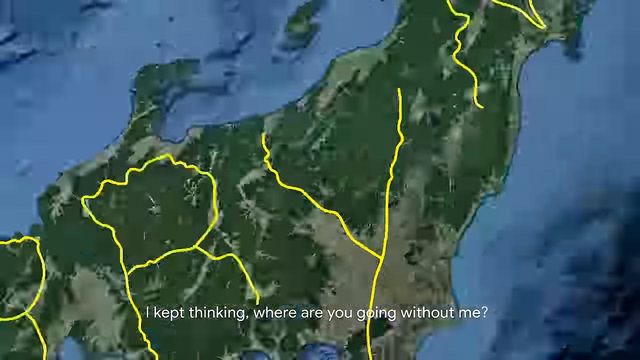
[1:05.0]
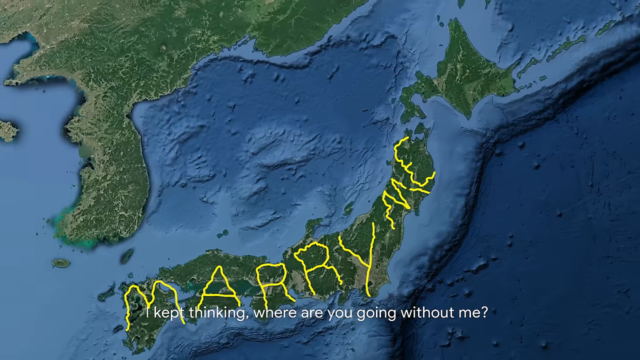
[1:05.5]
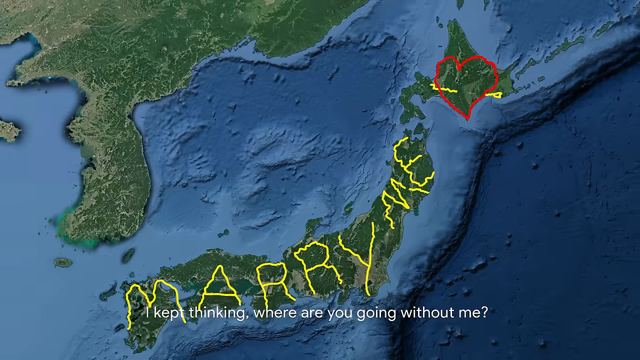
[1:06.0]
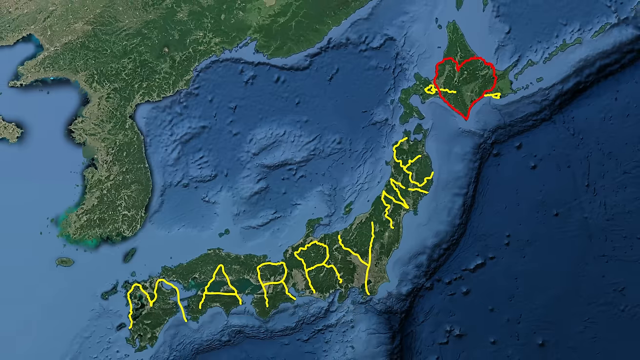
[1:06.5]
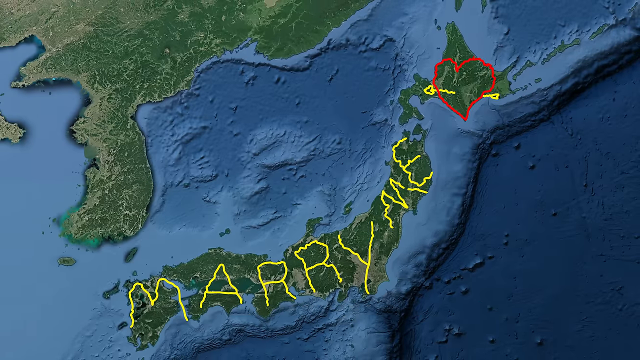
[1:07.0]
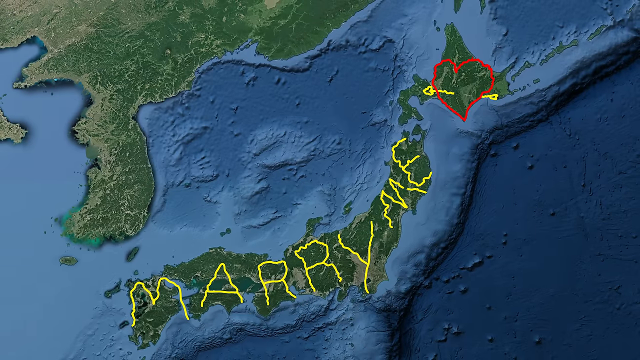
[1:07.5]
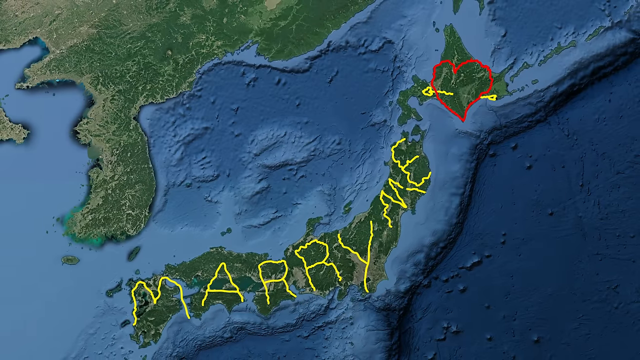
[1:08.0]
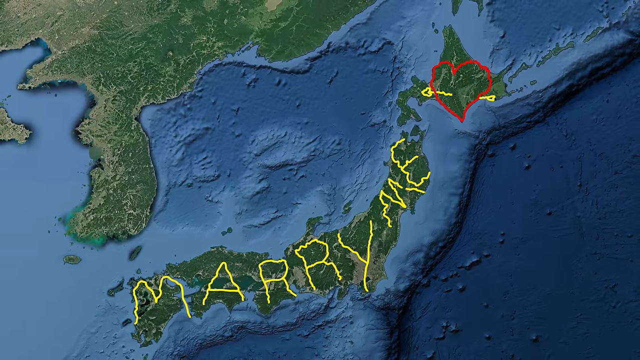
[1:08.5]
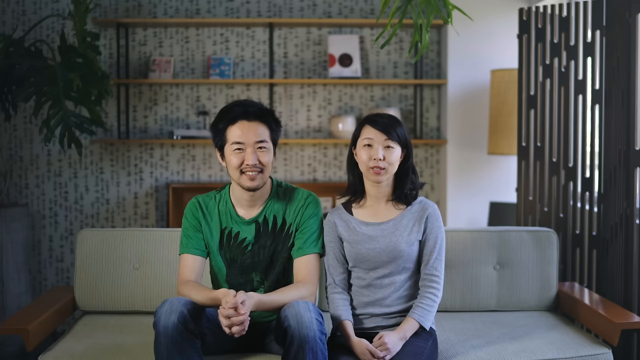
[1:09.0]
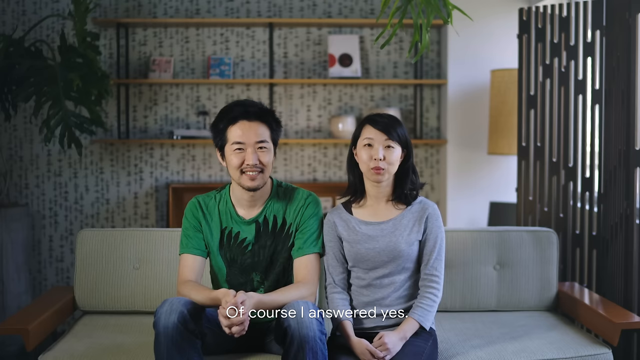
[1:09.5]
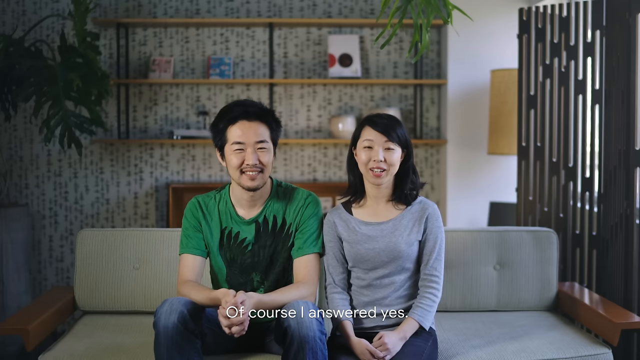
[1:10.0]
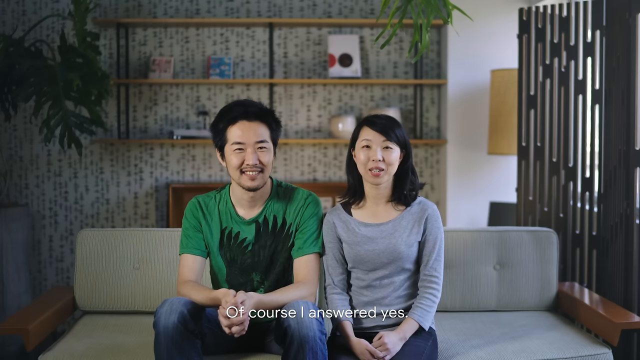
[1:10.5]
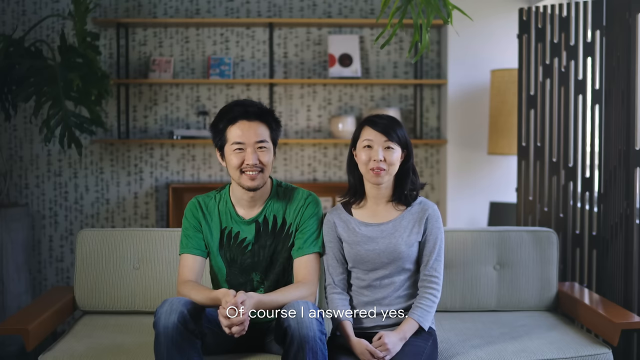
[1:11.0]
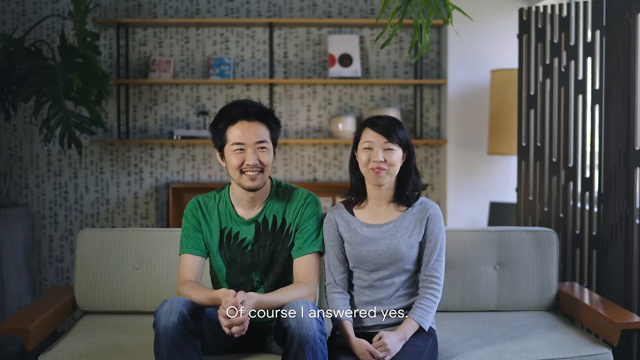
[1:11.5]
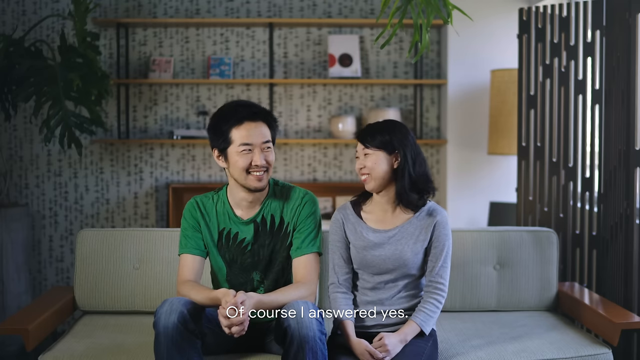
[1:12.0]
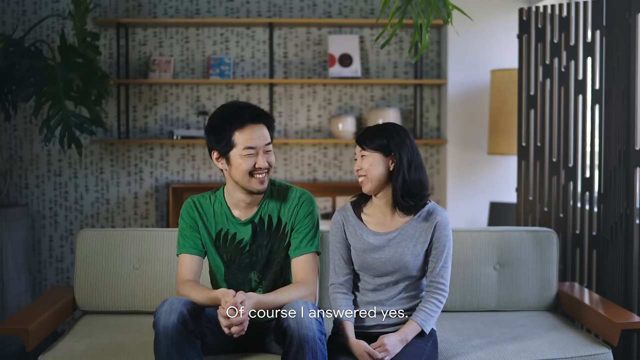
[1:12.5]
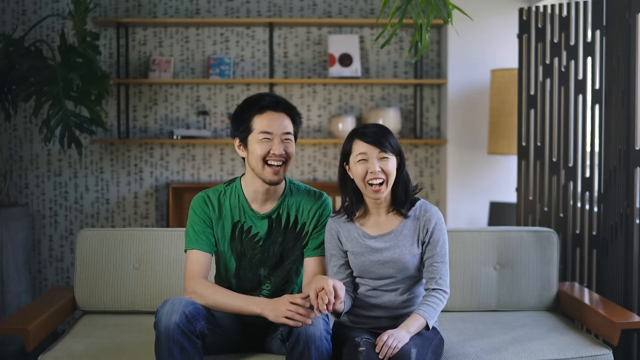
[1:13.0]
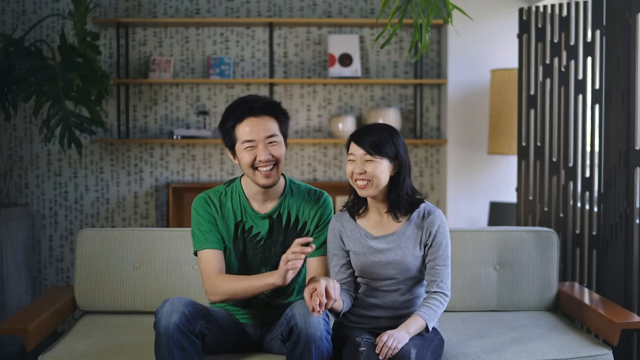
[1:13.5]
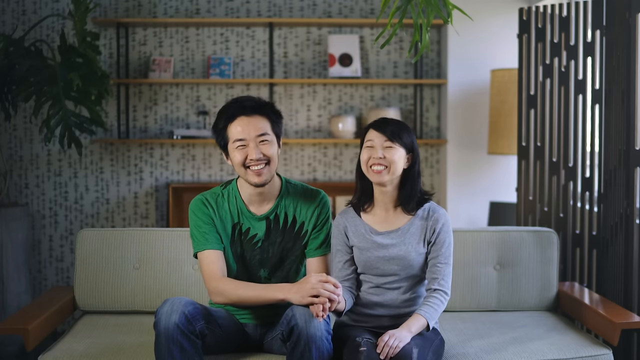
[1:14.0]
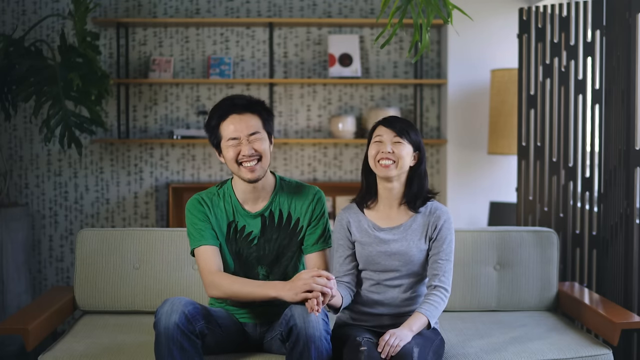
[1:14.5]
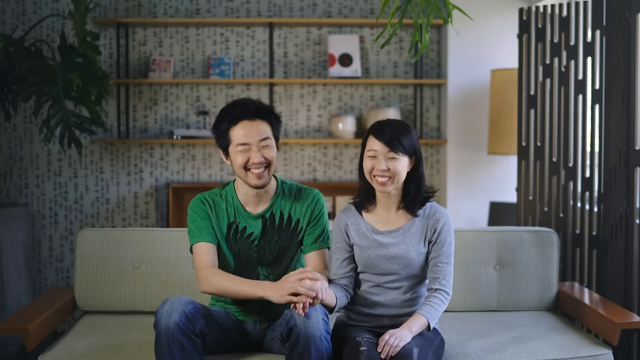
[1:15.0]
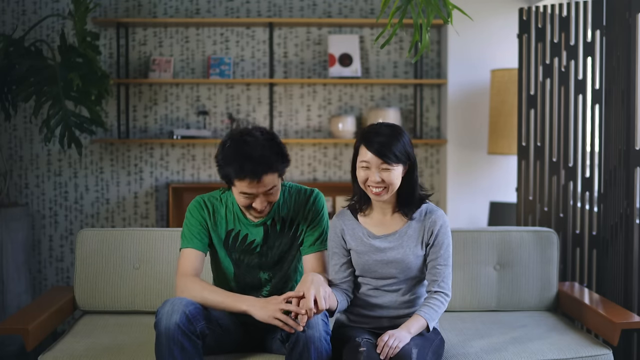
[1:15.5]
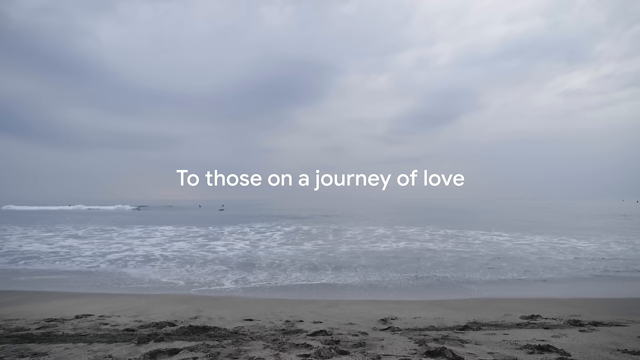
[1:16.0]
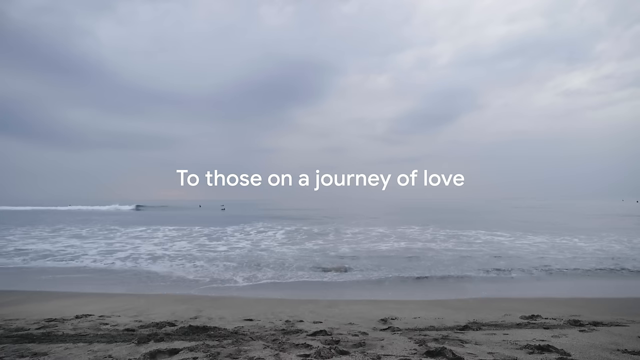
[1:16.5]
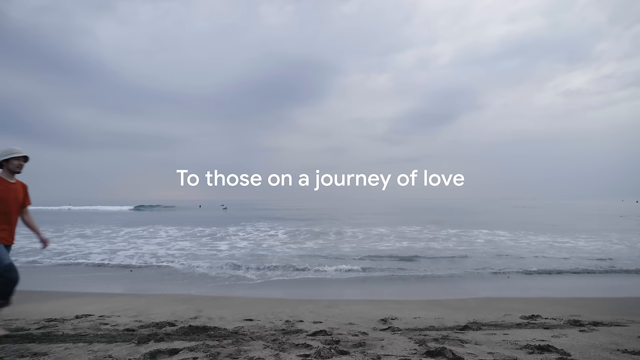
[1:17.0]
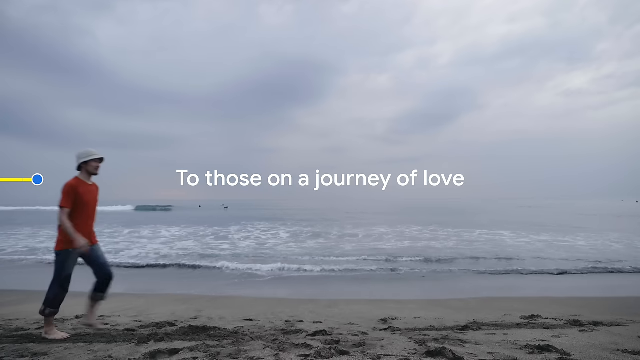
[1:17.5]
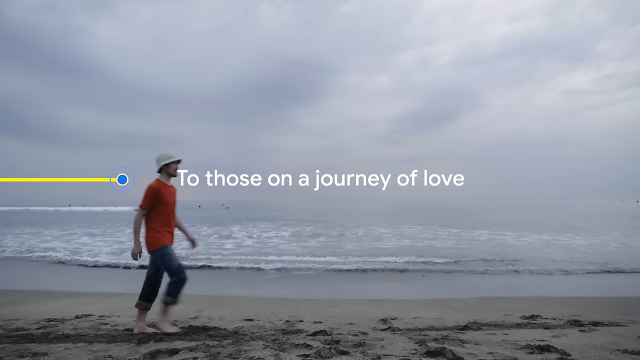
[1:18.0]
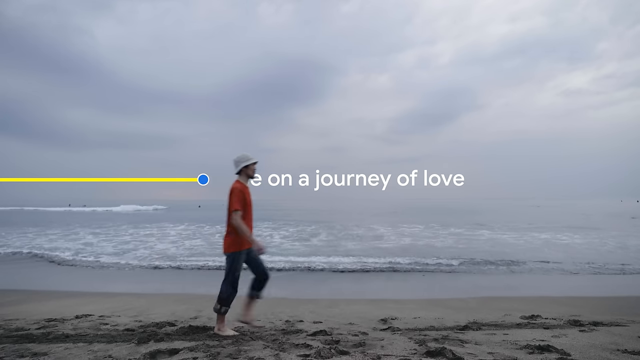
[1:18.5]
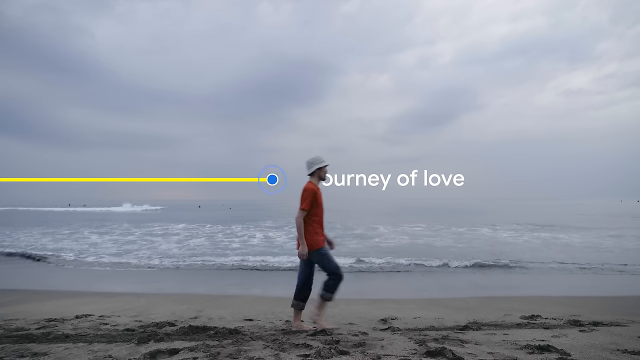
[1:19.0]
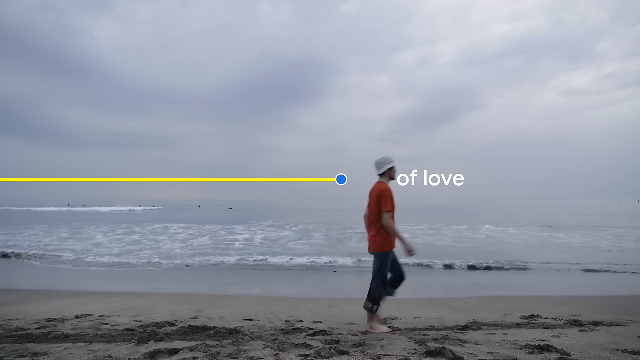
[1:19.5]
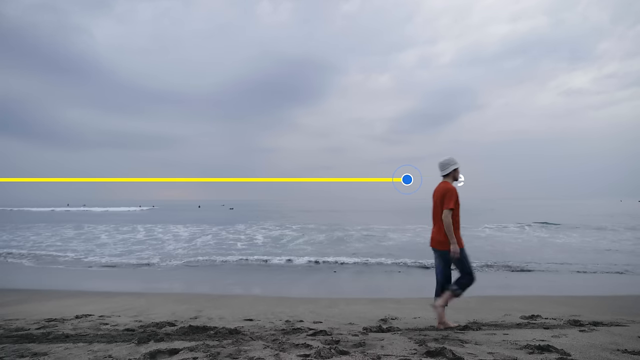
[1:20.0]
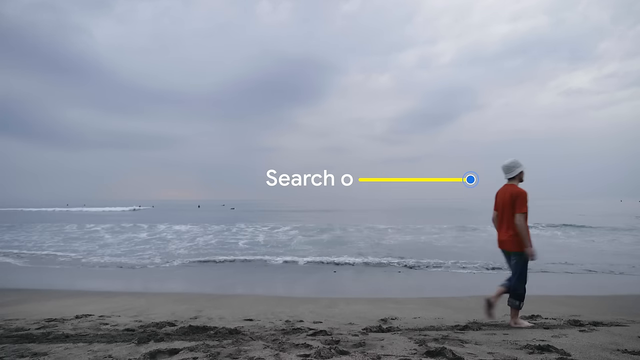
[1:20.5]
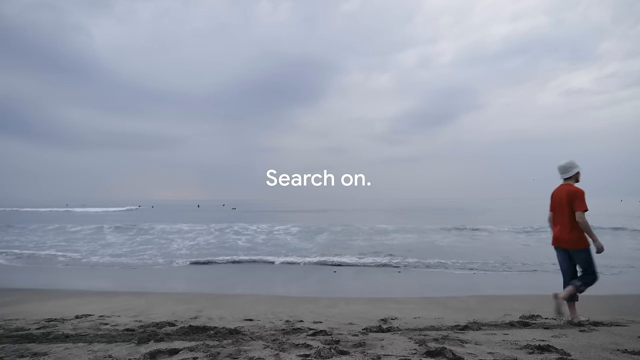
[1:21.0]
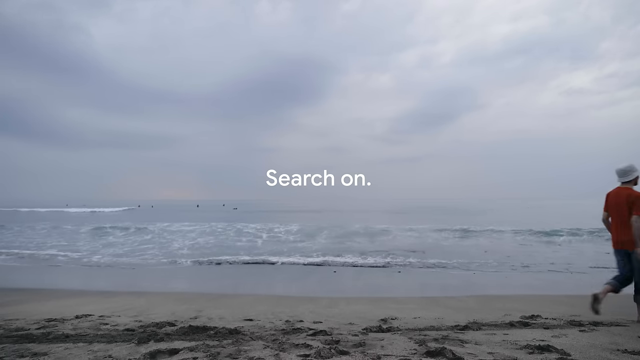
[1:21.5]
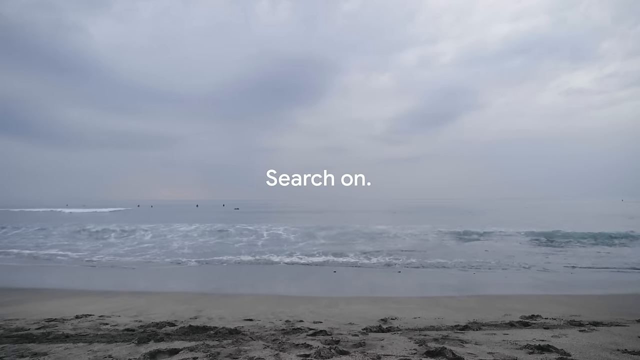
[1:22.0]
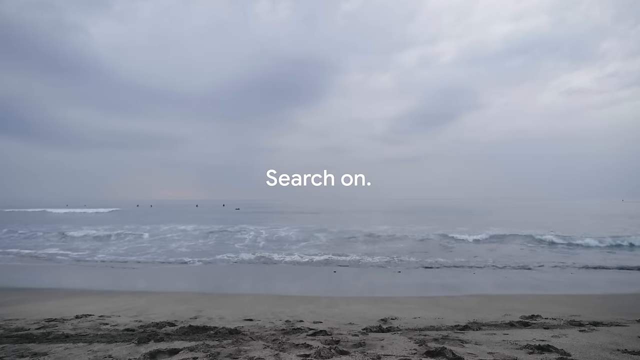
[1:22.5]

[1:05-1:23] A Google Earth image of Japan shows yellow writing that says "marry me," and at the beginning of the map there is also a heart with an arrow through it on one of the Japanese islands. The couple sits together on the same couch seen at the beginning of the video, holding hands and laughing as they talk, and she says "of course I said yes." The woman wears a grey long-sleeve shirt and blue jeans. The view pans out to him walking across the screen on a beach, with text reading "to those trying to find love, search on." He wears a red t-shirt and jeans and is followed by a Google line behind him with a blue dot at the end of it, and a Google logo is in the bottom right corner of the screen.